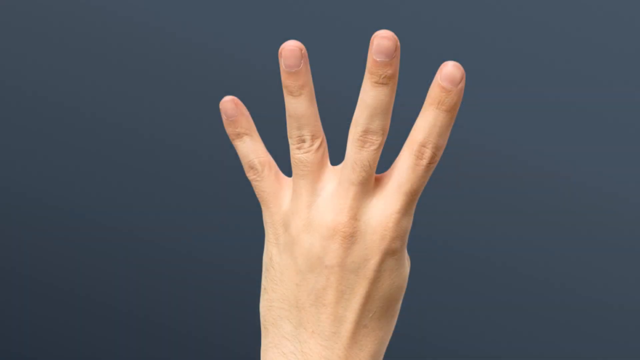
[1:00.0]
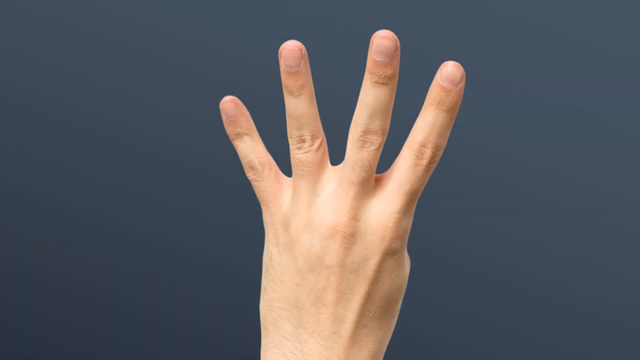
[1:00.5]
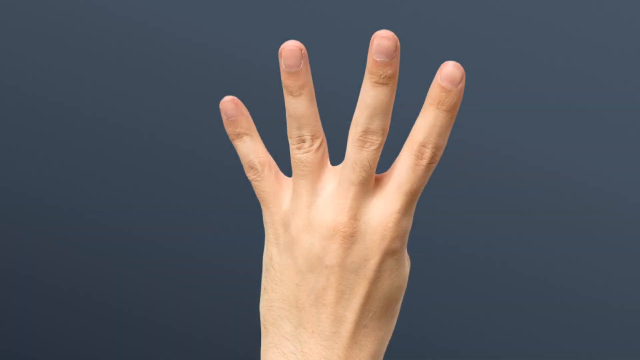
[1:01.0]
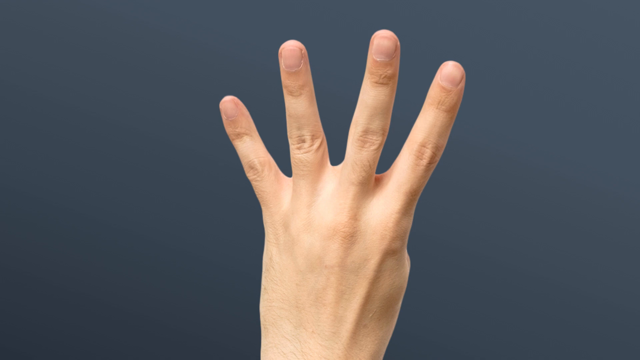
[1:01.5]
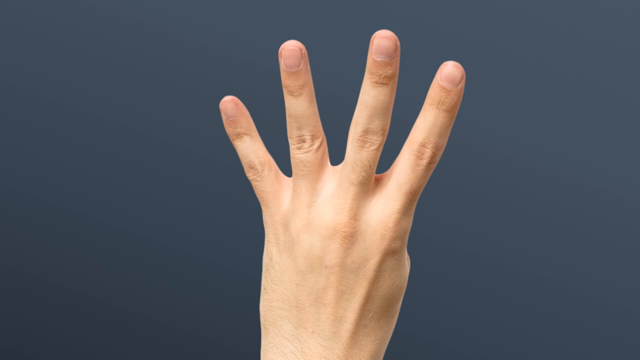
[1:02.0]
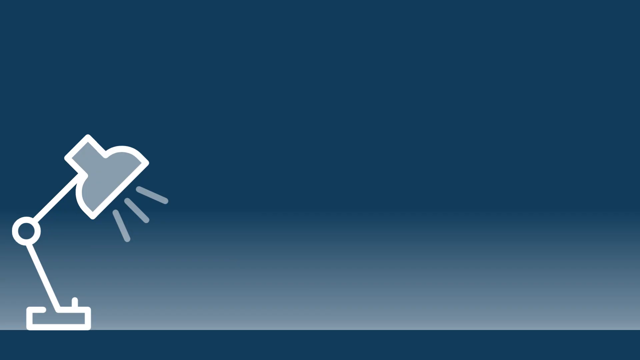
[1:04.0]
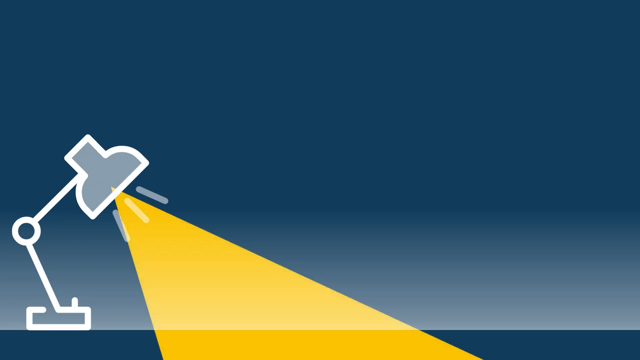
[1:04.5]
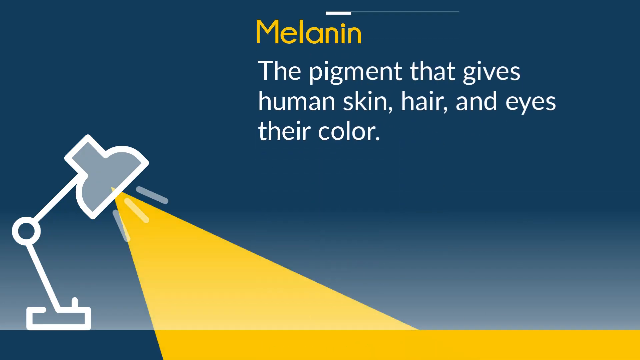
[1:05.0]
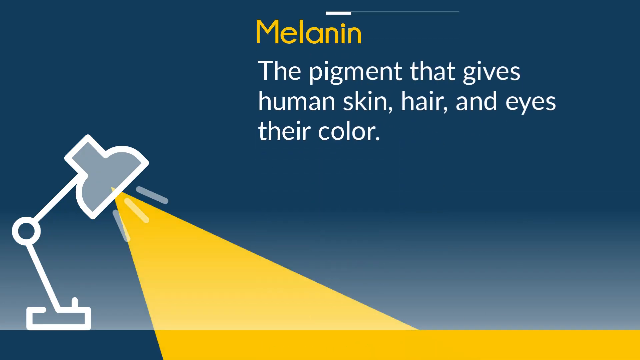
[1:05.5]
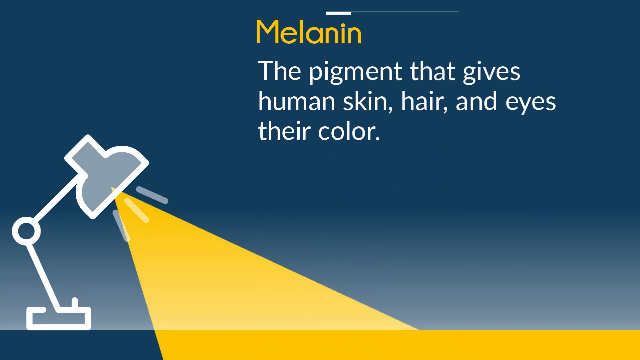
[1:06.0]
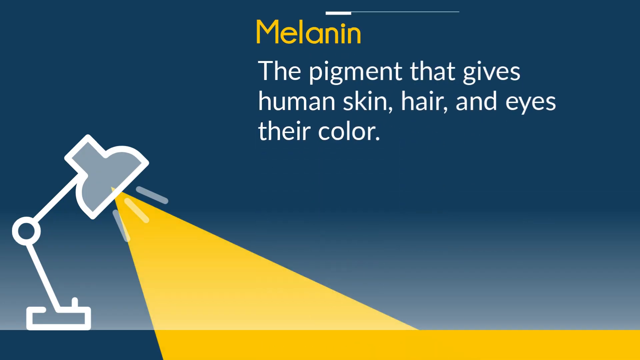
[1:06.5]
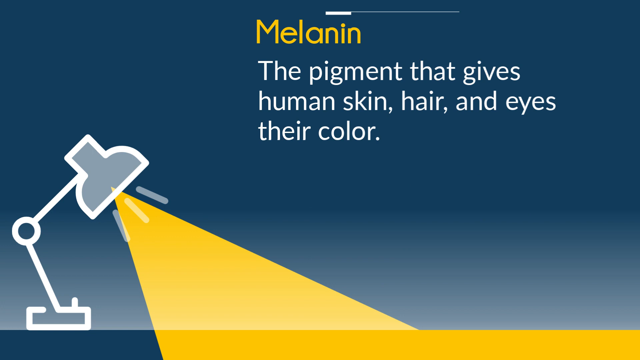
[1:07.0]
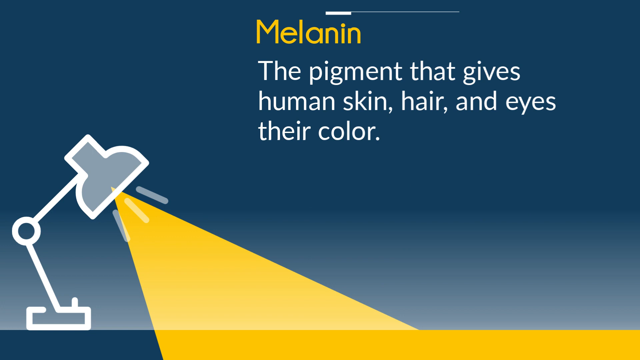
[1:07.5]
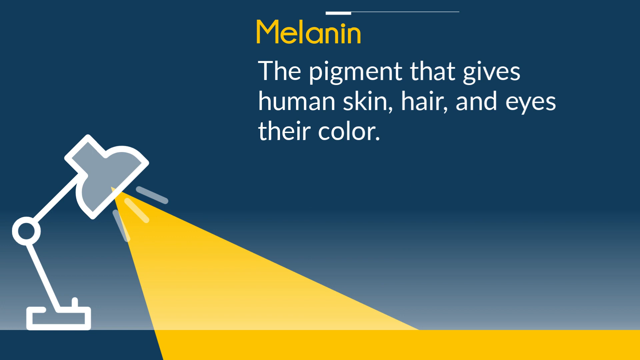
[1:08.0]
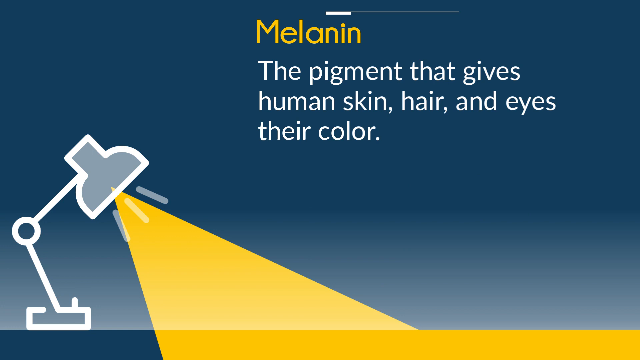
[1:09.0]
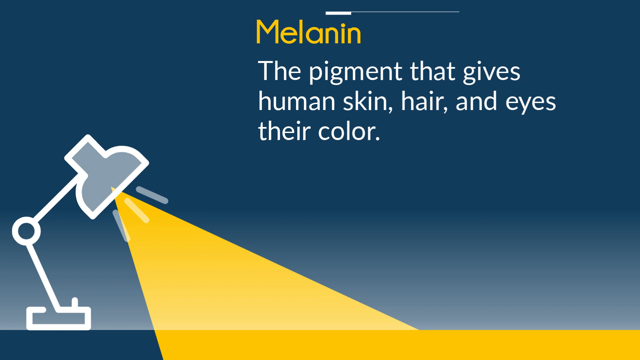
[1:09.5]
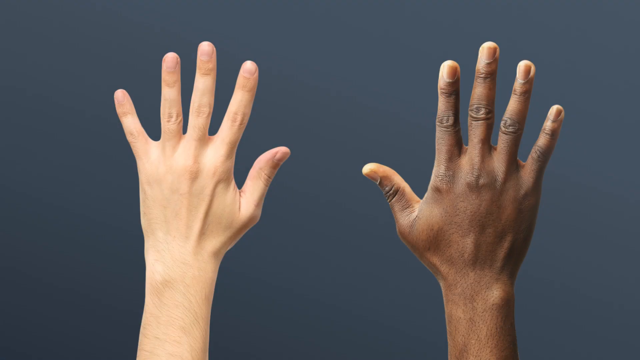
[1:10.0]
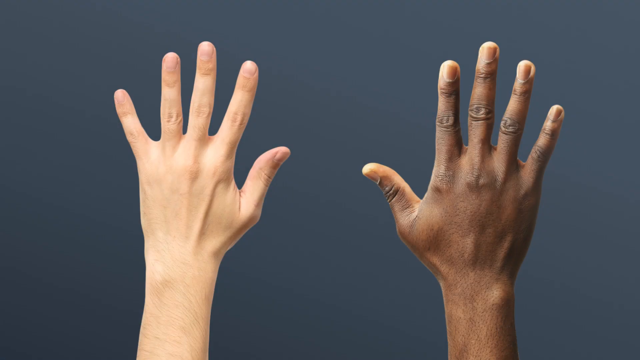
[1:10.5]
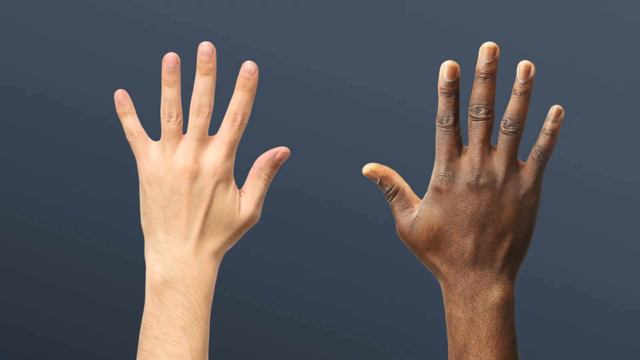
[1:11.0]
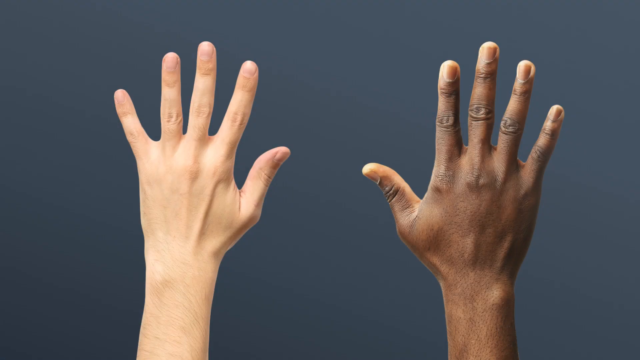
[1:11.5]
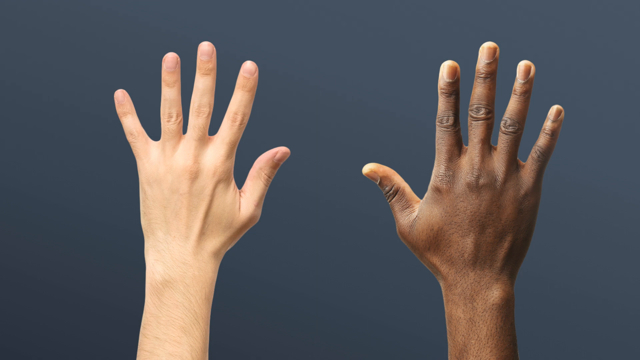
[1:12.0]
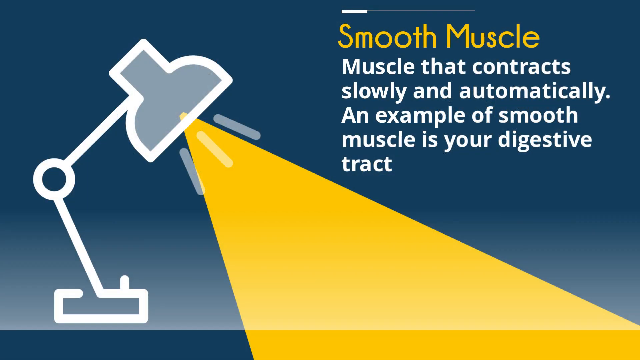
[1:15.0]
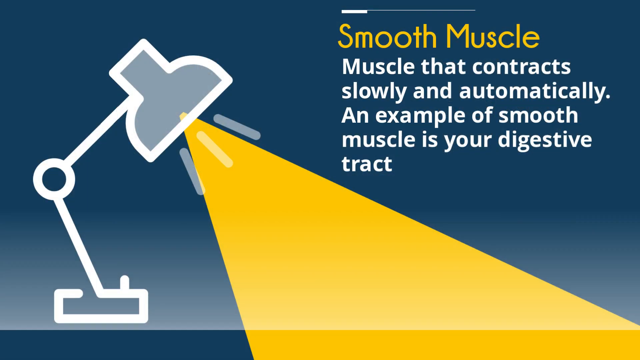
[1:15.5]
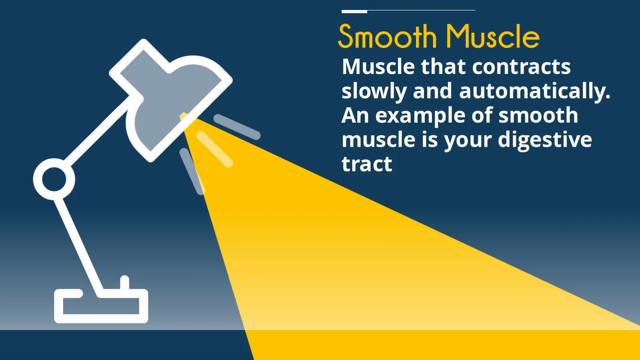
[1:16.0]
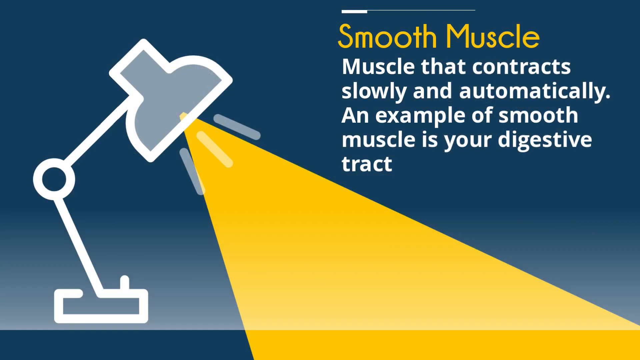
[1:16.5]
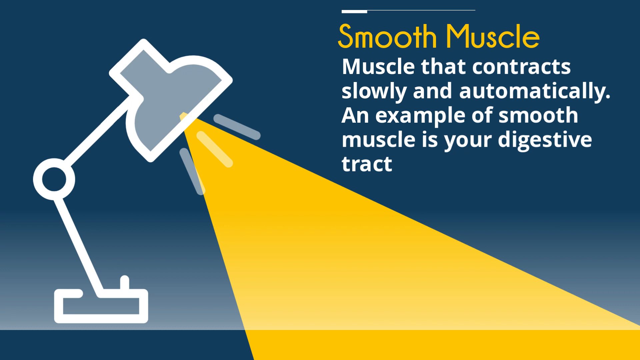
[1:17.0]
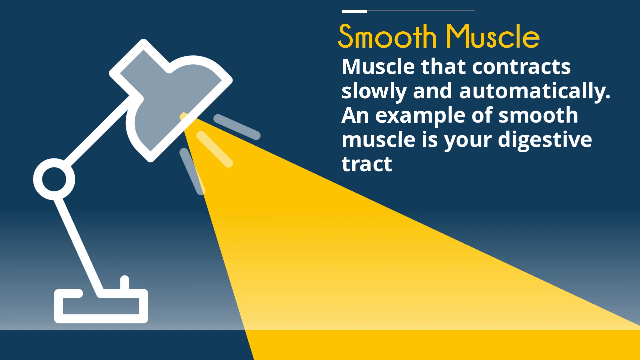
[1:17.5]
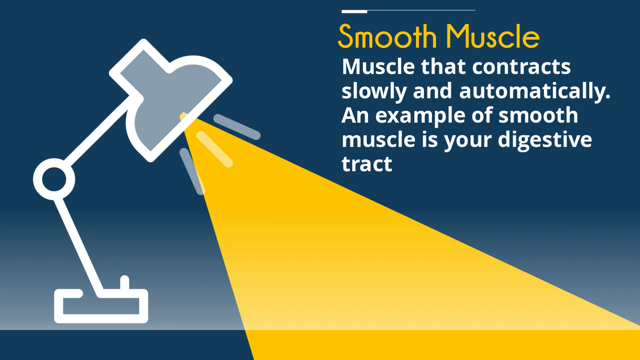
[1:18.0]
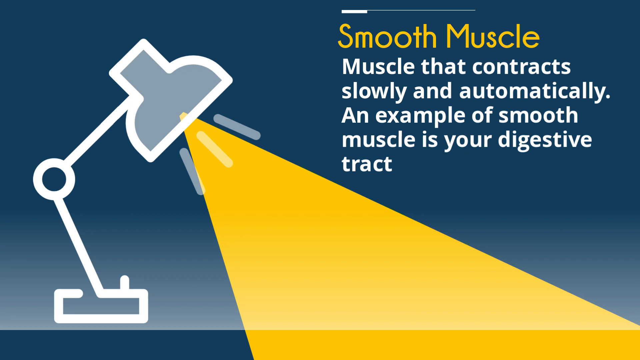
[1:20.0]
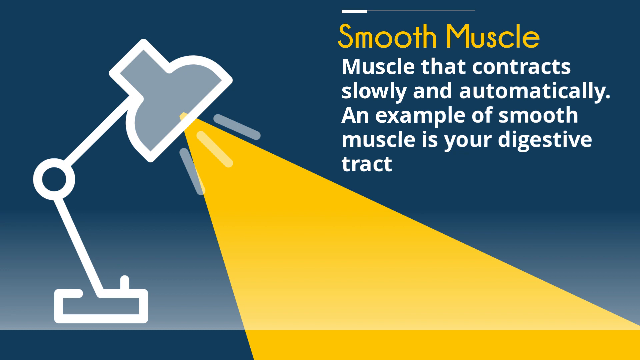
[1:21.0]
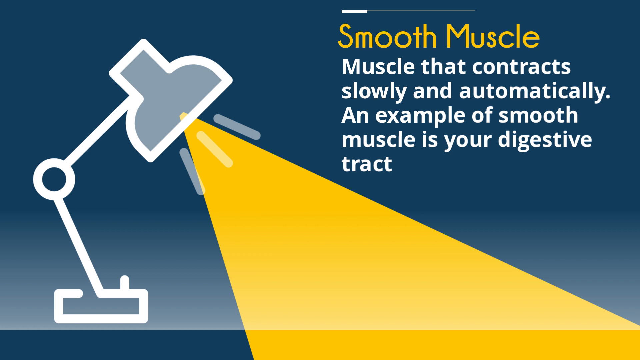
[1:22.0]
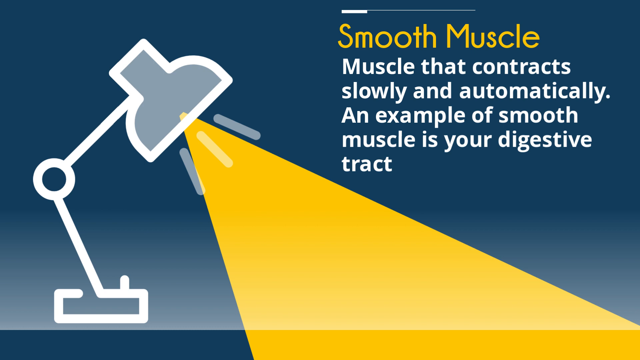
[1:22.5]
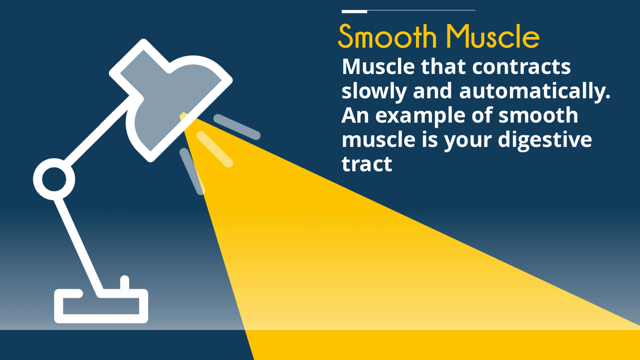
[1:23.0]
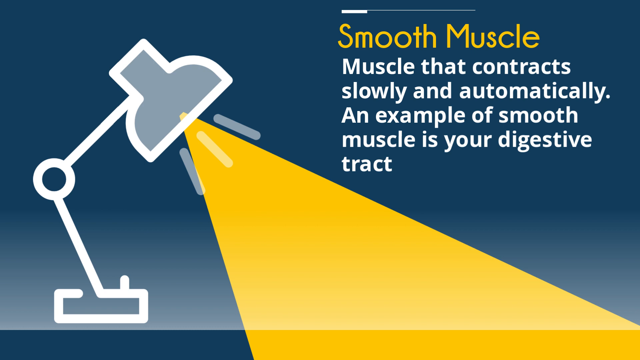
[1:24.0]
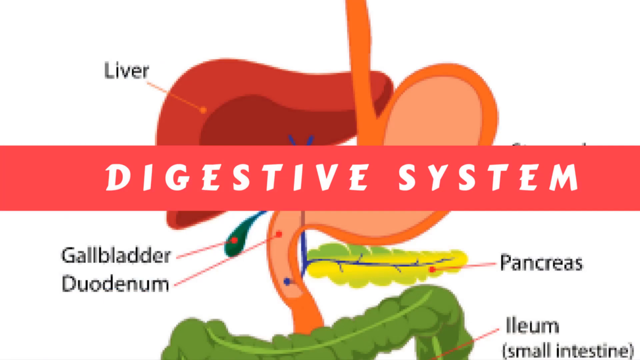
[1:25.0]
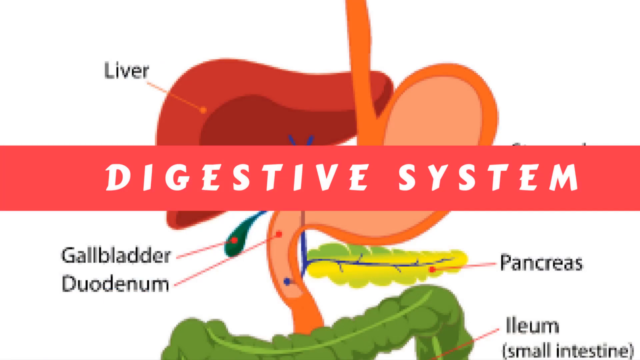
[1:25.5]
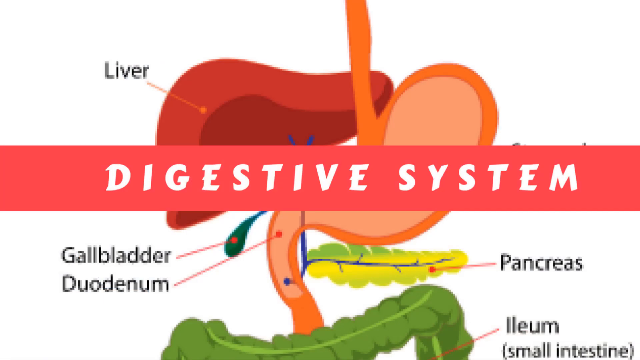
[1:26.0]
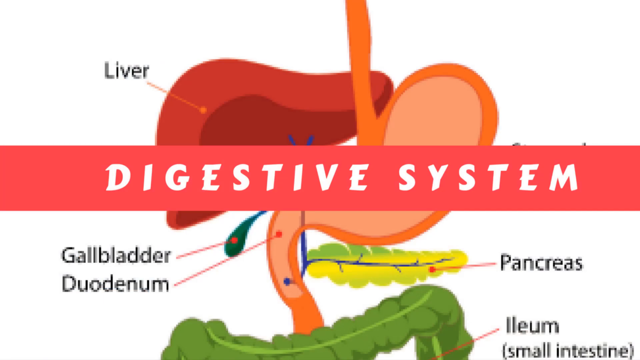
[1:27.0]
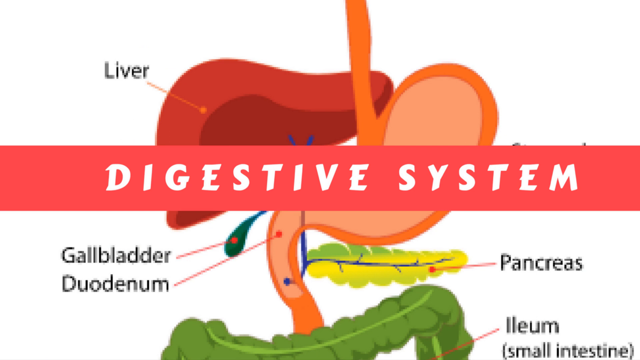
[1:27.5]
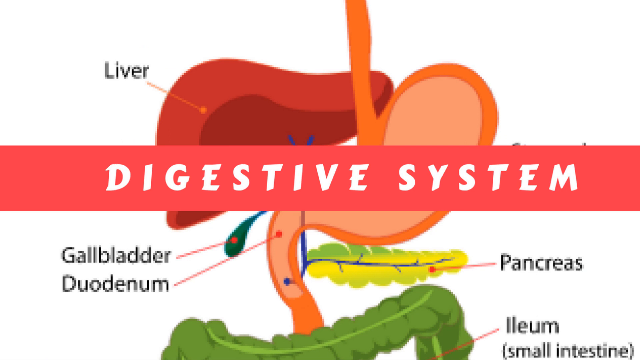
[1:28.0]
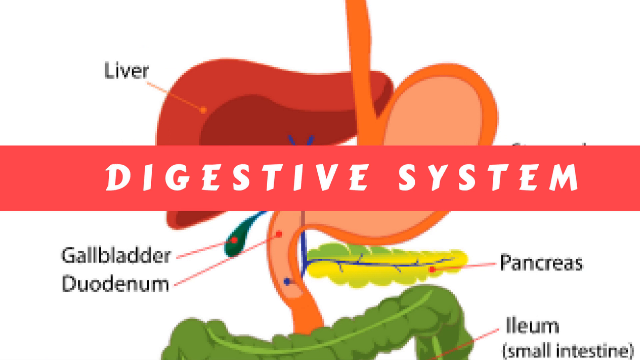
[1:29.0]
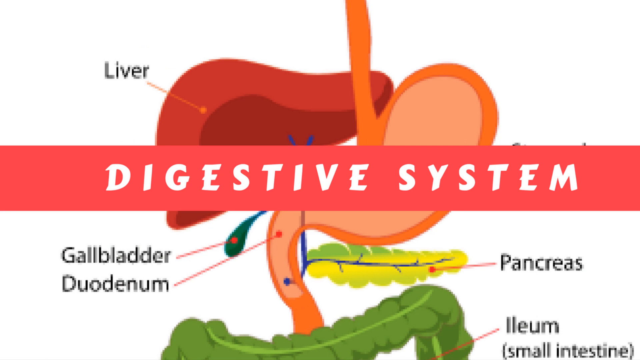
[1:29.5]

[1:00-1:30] A left hand holds up four fingers to indicate the number four. The video then transitions to a page with a cartoon desk lamp beaming light from top to bottom and the word "melanin", defined as "the pigment that gives human skin, hair, and eyes their color." Next, a pair of hands appears: the left hand is pale and the right hand is much darker. The video goes back to a definition page for "smooth muscle": "muscle that contracts slowly and automatically. An example of smooth muscle is your digestive tract." A diagram of the digestive system follows, showing organs such as the liver, the pancreas, the gallbladder, and the duodenum, with the large words "digestive system" in bold capital letters in the center of the page.